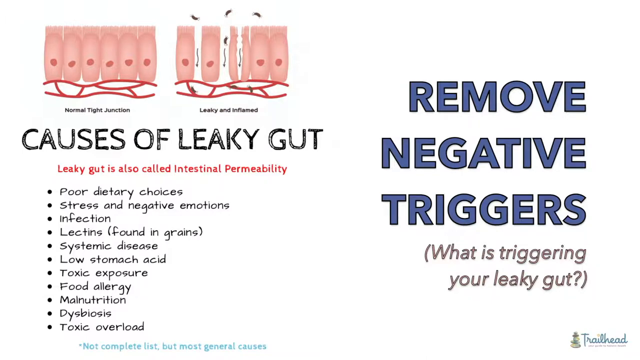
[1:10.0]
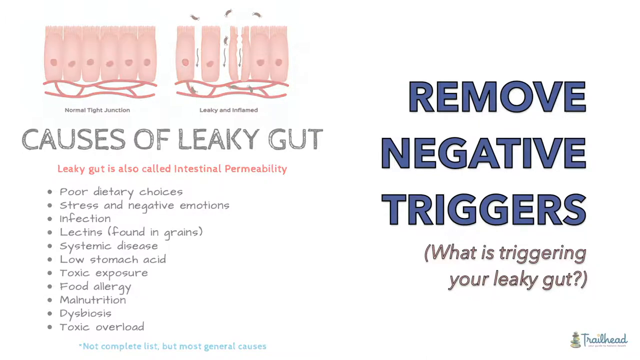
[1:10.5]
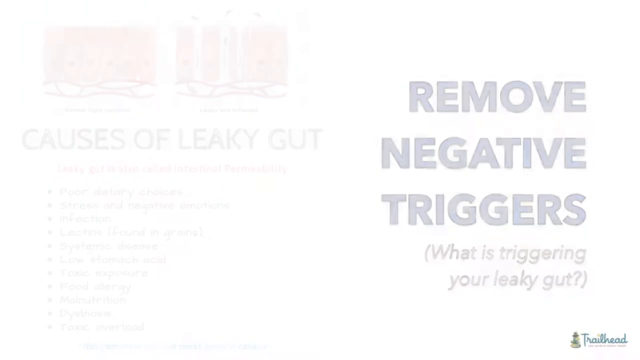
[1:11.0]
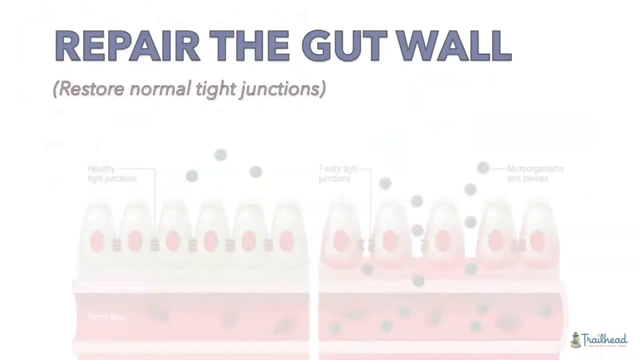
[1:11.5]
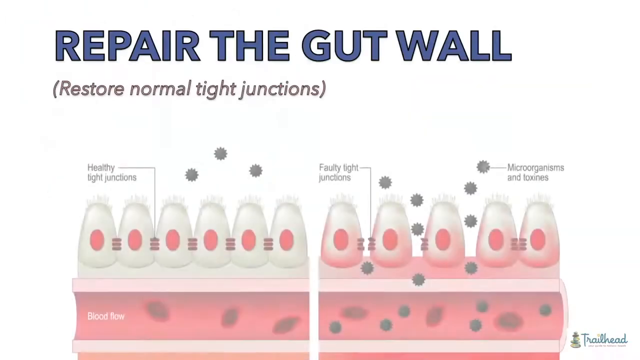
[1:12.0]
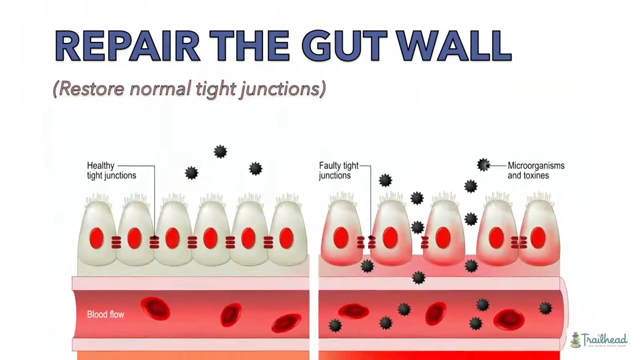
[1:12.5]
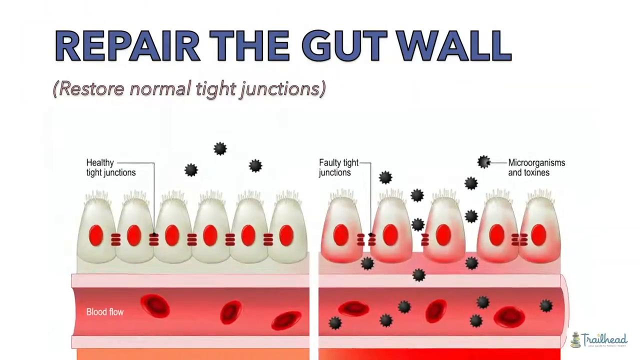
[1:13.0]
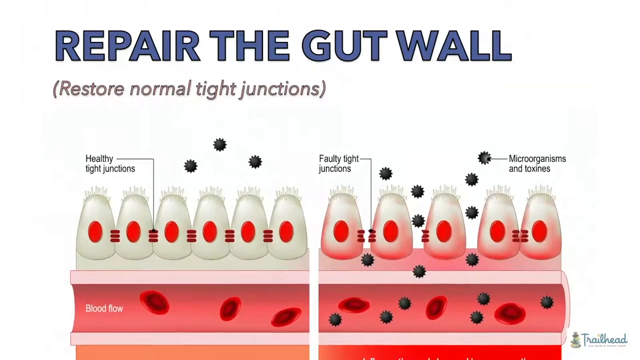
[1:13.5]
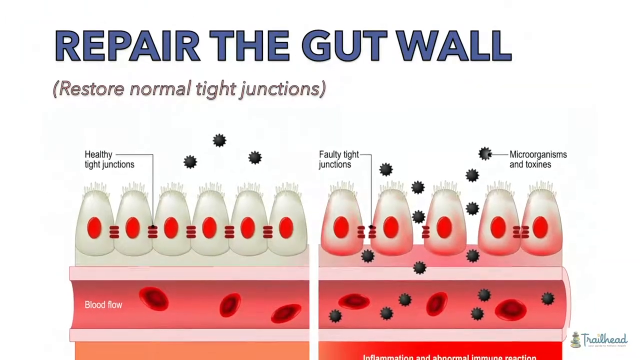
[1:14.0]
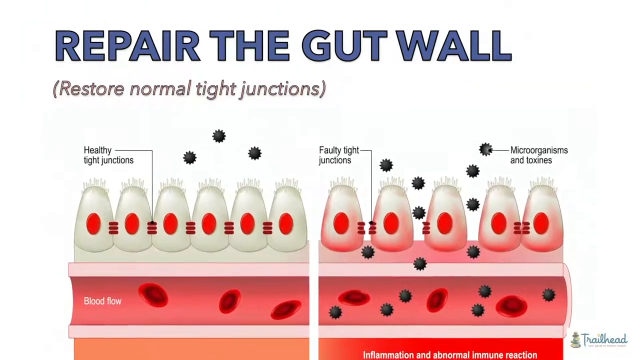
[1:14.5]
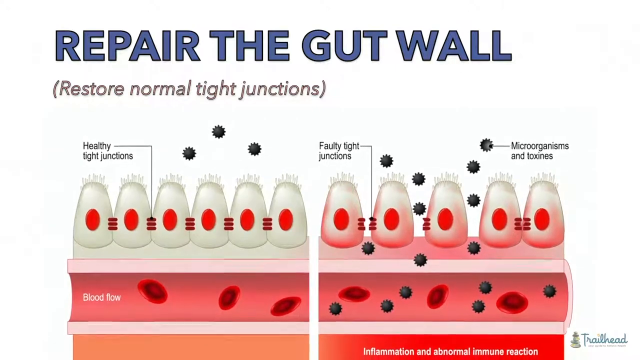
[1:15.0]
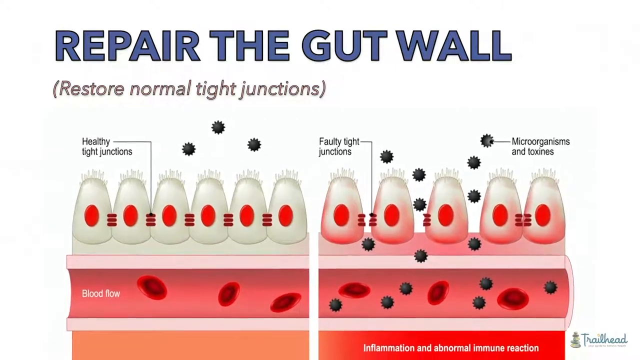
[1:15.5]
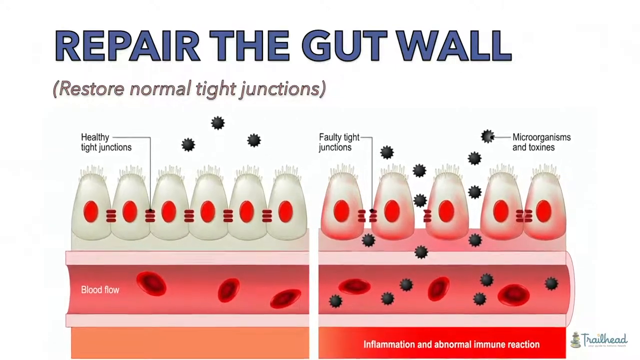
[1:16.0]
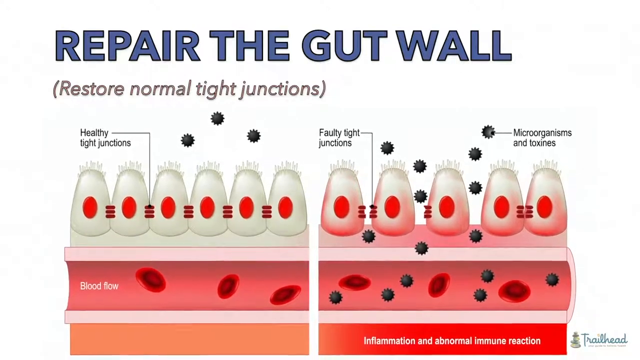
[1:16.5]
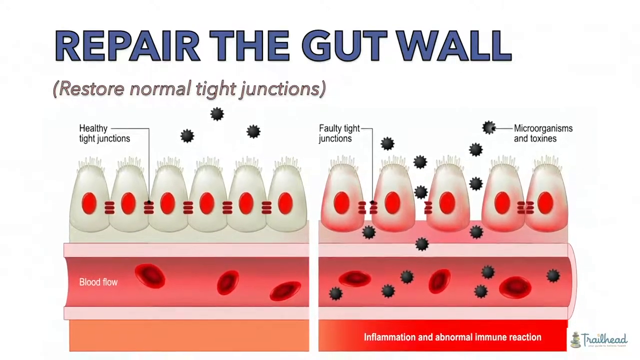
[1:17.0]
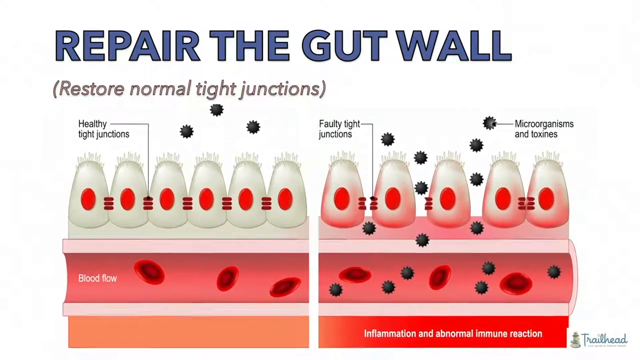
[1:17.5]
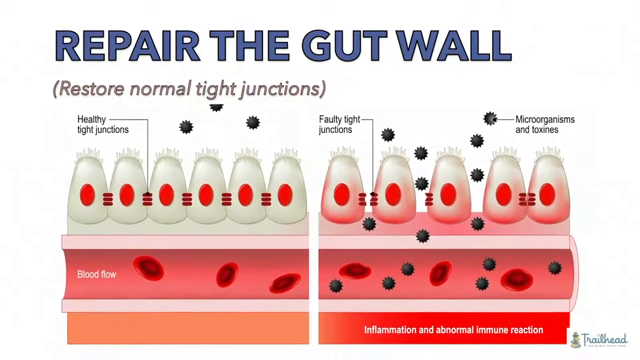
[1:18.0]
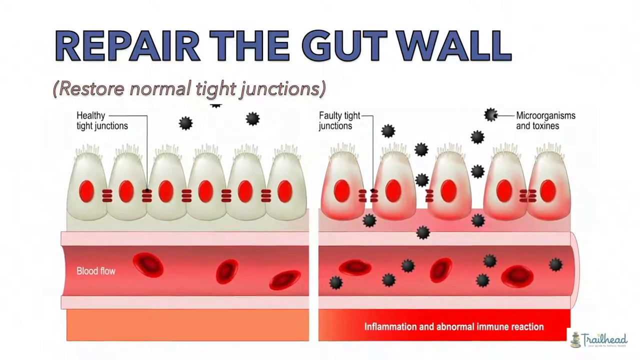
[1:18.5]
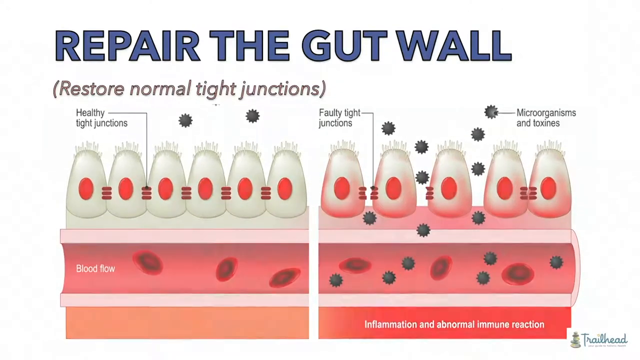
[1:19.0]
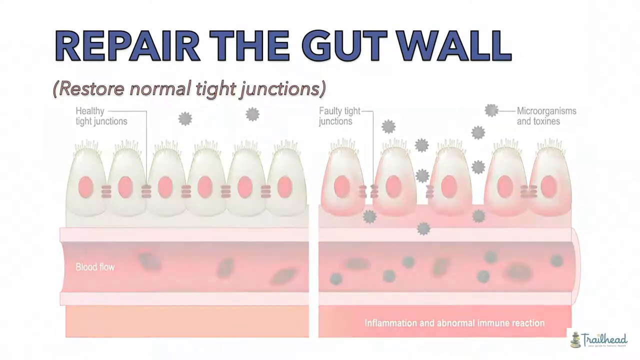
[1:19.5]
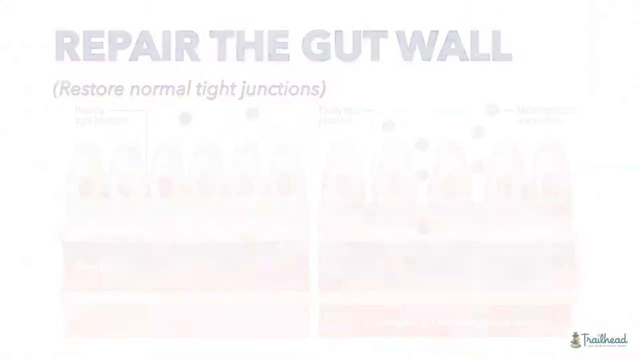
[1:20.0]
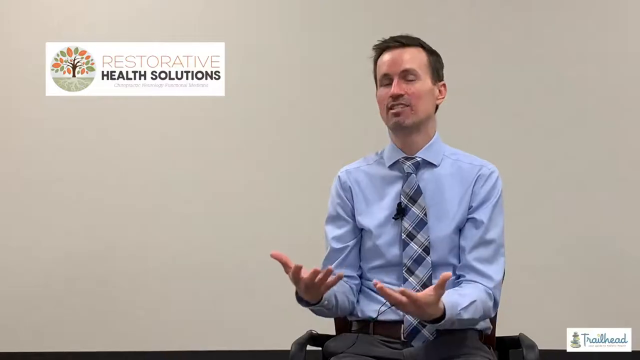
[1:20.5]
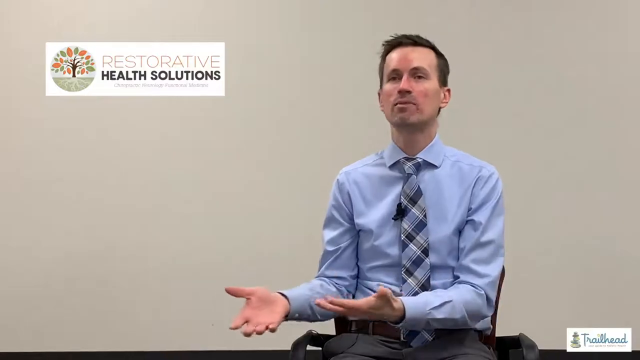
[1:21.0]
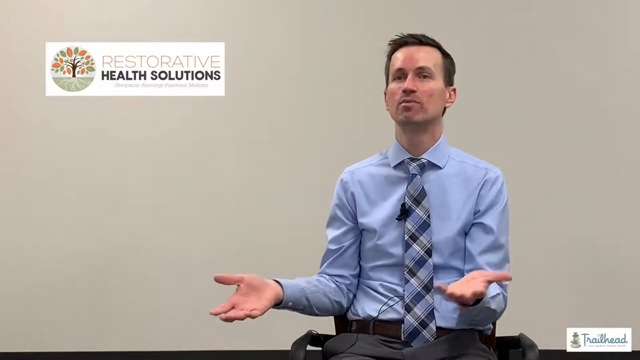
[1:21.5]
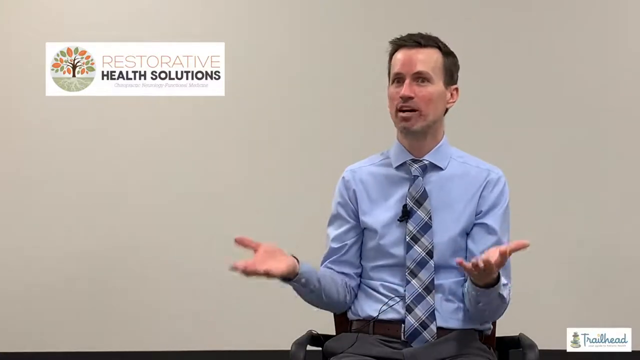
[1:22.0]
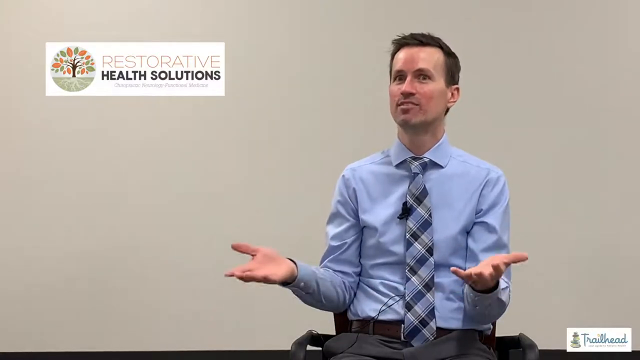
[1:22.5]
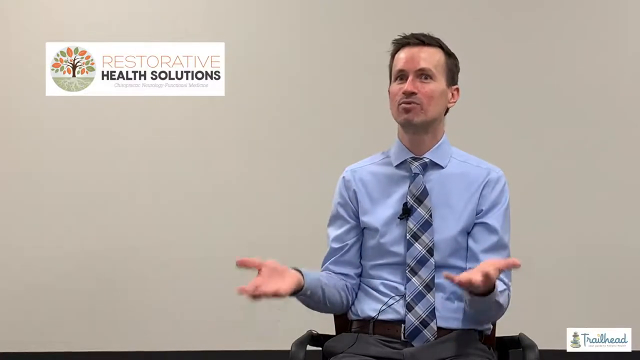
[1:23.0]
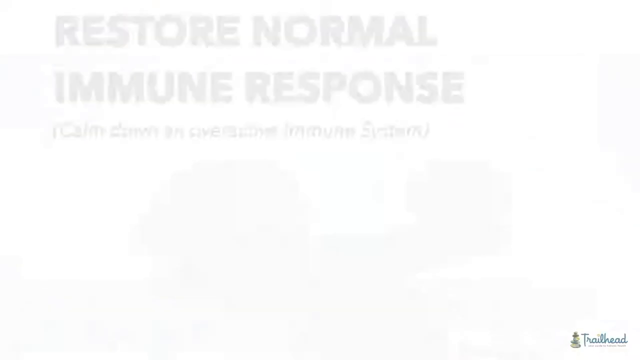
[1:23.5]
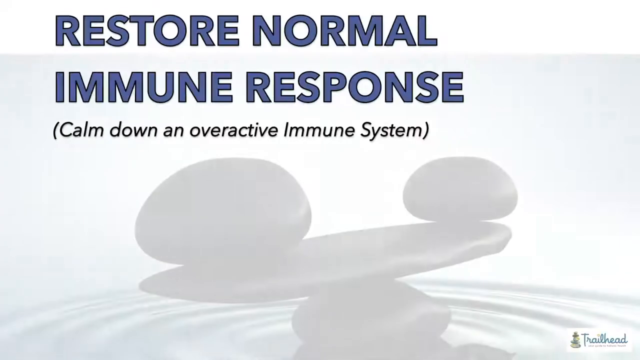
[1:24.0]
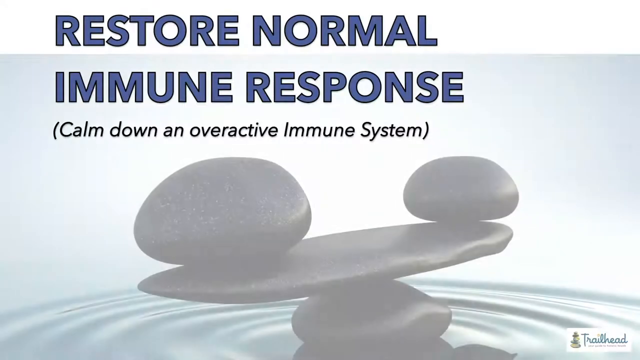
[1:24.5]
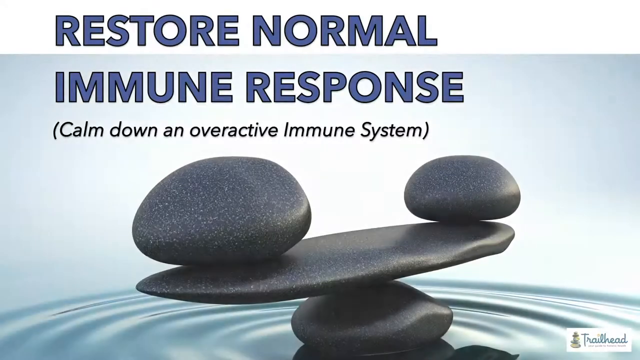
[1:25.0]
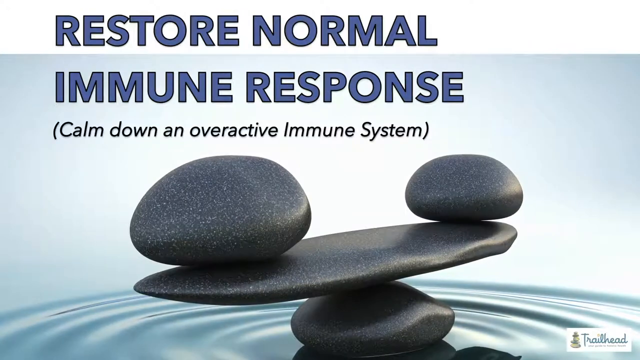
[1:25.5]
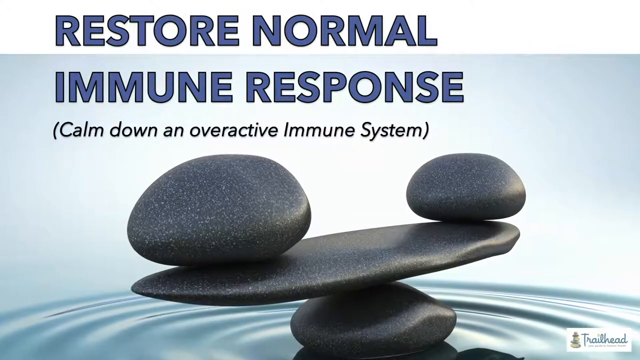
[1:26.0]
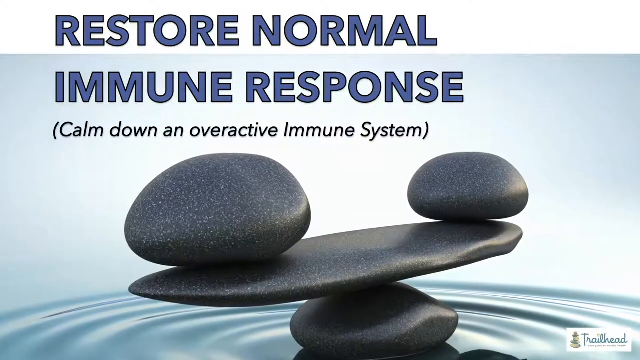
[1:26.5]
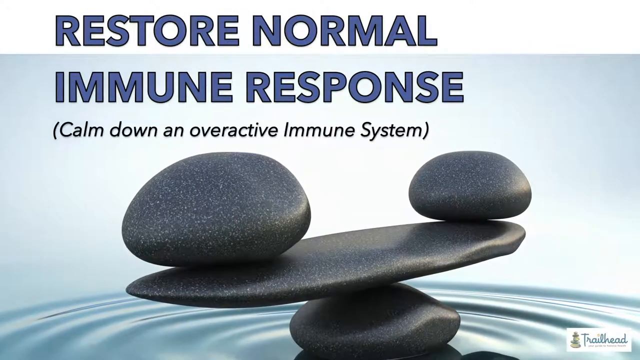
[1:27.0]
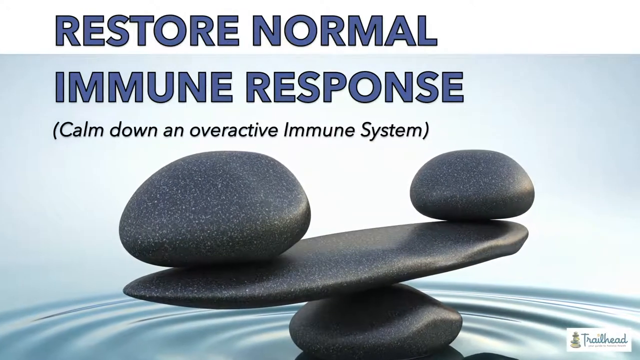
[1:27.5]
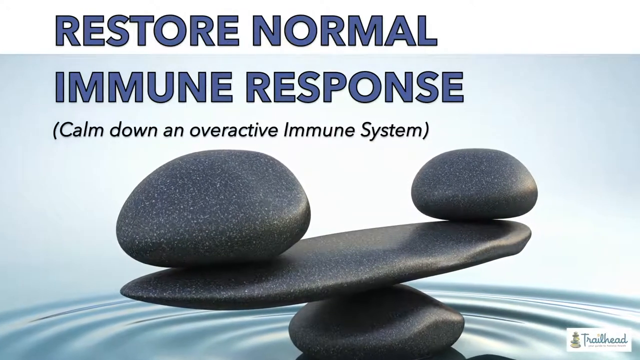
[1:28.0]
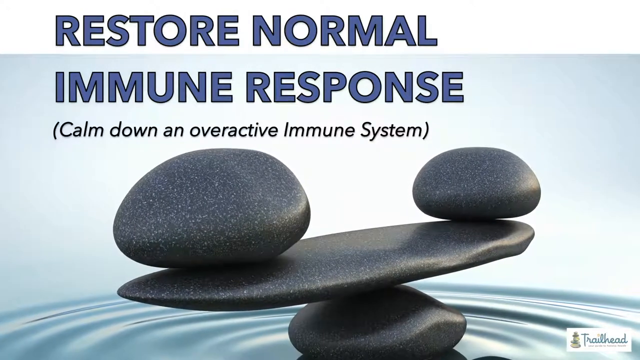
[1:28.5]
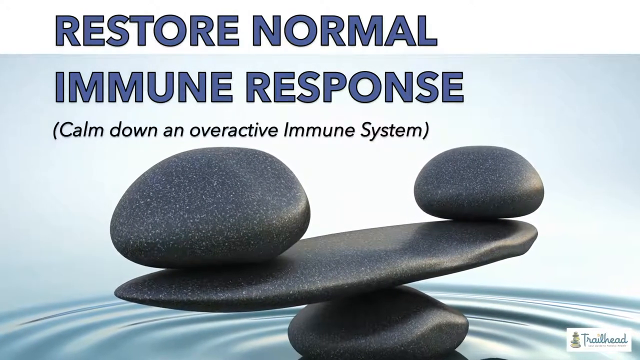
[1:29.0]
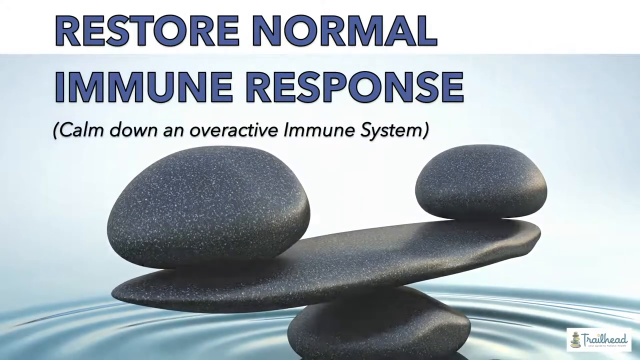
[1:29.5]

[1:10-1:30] A slide about repairing the gut wall shows that heading in dark navy blue text at the top of the screen. Below it, highlighted in parentheses, the text says "restore normal tight junctions." Further down is a diagram in white, red and blue, in which blue dots represent gas seeping through while red dots show the containment. Below that is what may be a skin layer, and the diagram appears to have red and white blood cells throughout, showing some of the leakage that escapes through. The video then returns to the dark-haired man in front of the gray background, who likes to use his hands as he speaks; he is kind of holding his hands outward.